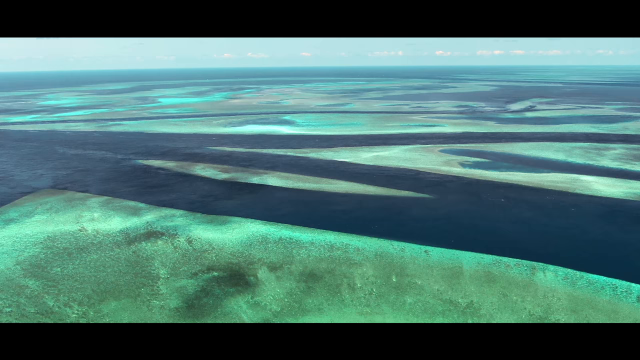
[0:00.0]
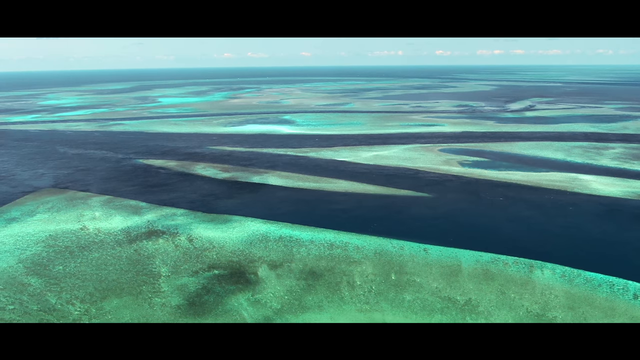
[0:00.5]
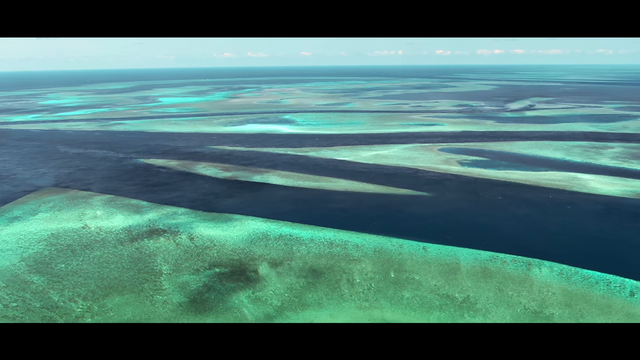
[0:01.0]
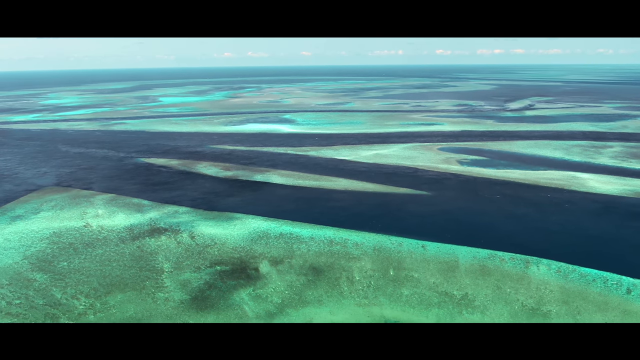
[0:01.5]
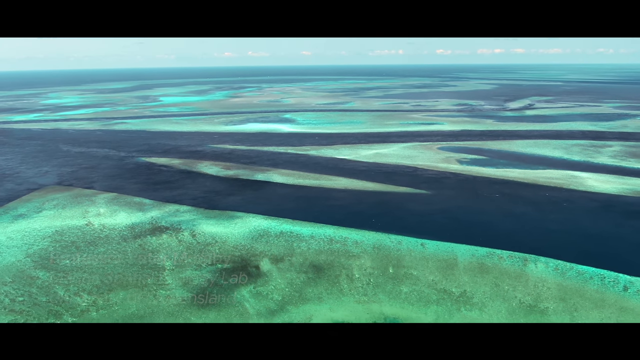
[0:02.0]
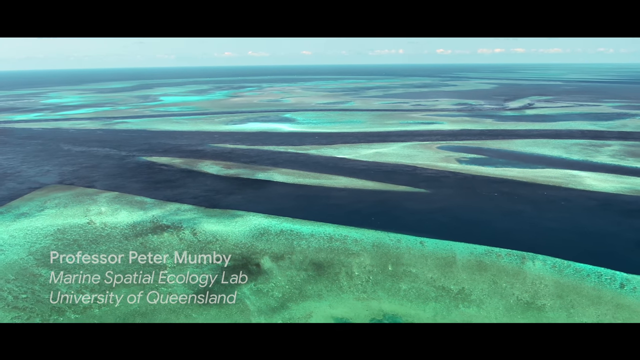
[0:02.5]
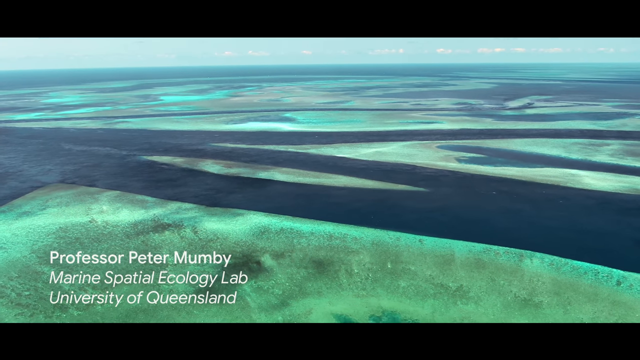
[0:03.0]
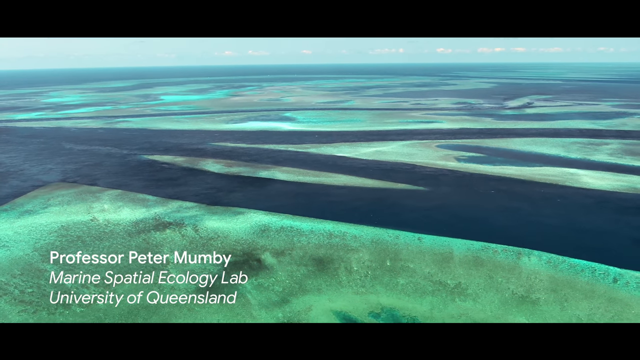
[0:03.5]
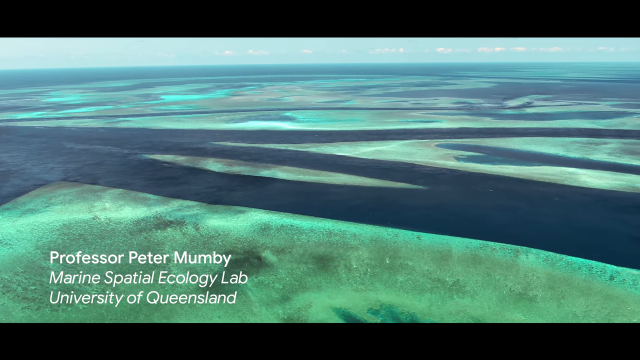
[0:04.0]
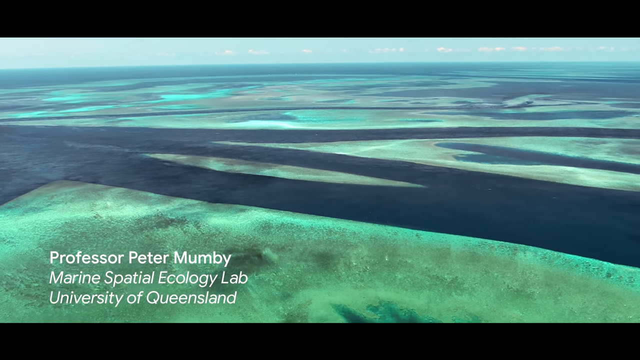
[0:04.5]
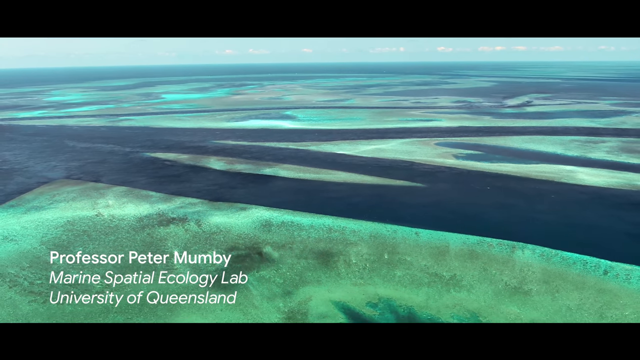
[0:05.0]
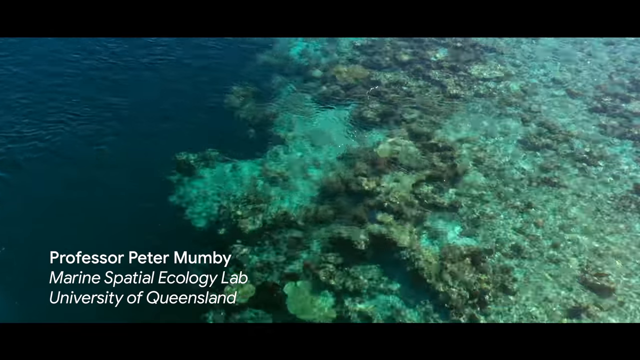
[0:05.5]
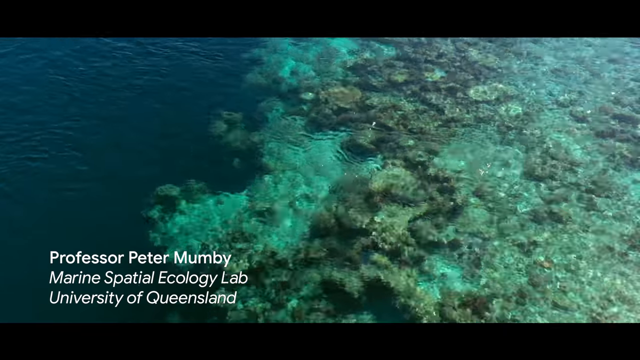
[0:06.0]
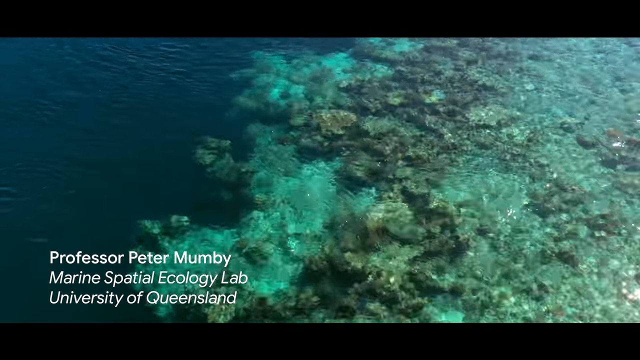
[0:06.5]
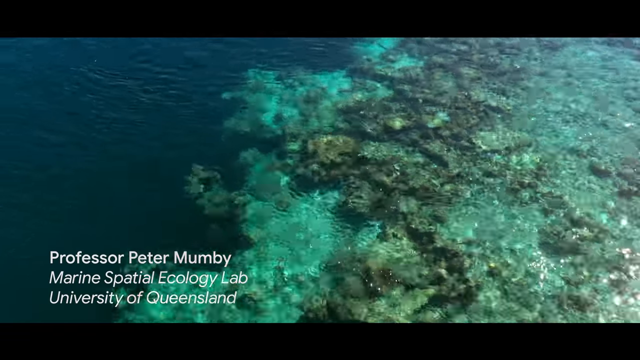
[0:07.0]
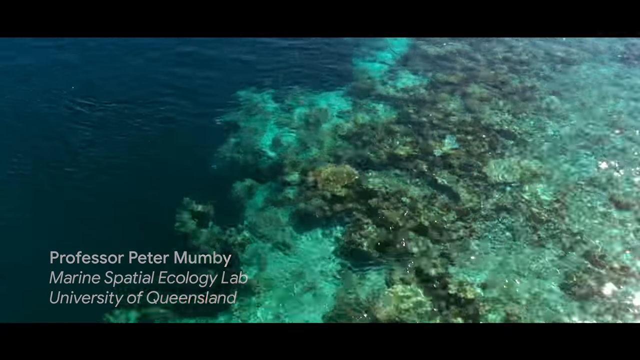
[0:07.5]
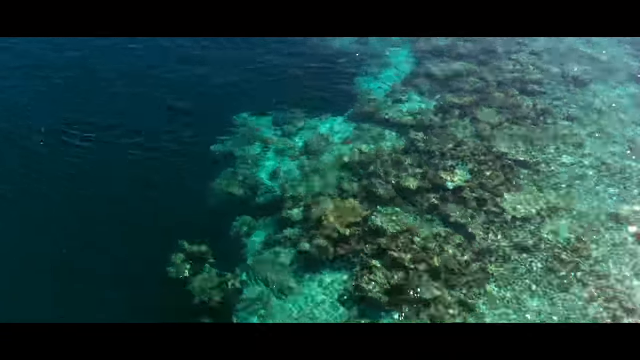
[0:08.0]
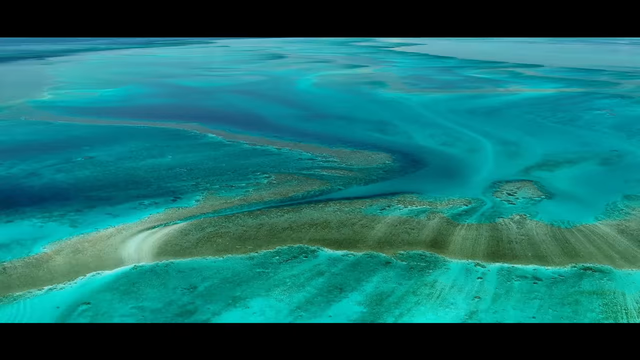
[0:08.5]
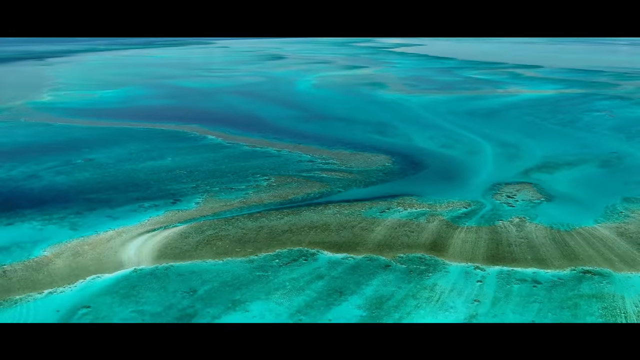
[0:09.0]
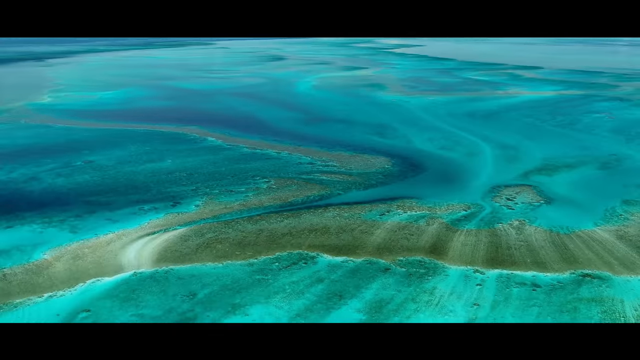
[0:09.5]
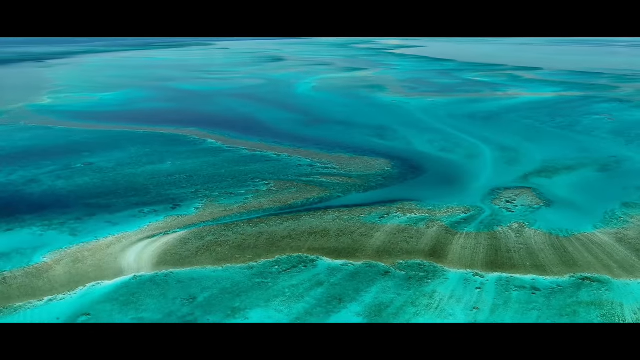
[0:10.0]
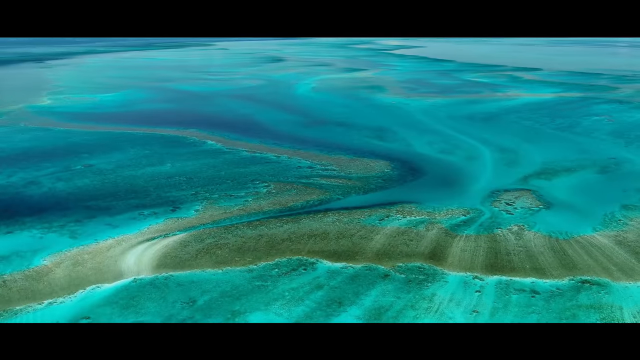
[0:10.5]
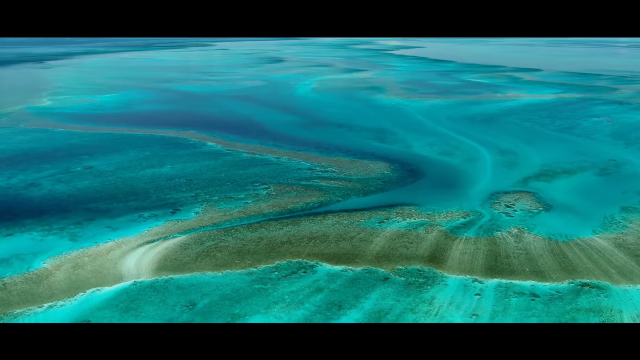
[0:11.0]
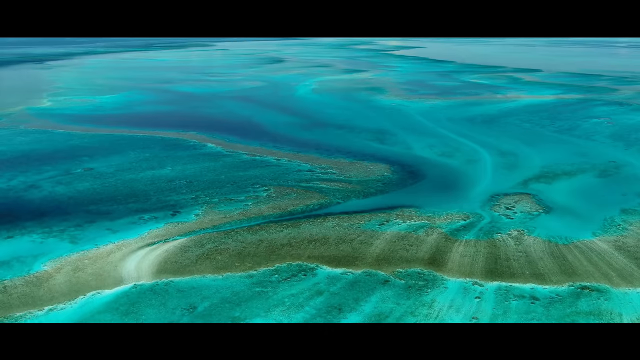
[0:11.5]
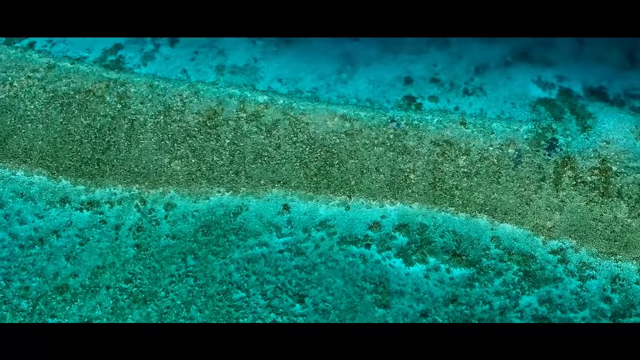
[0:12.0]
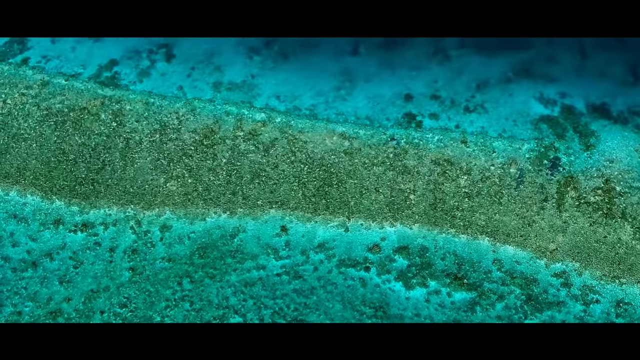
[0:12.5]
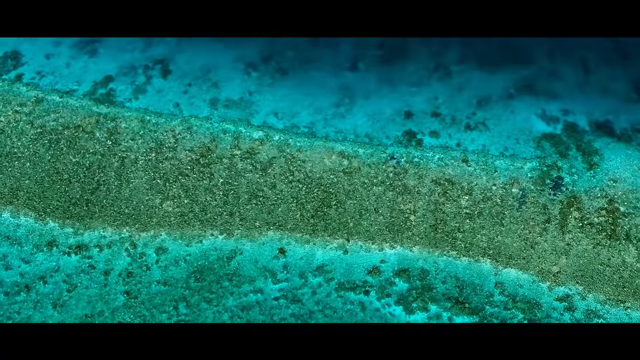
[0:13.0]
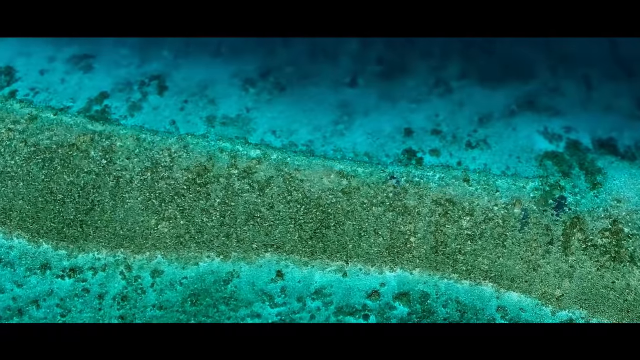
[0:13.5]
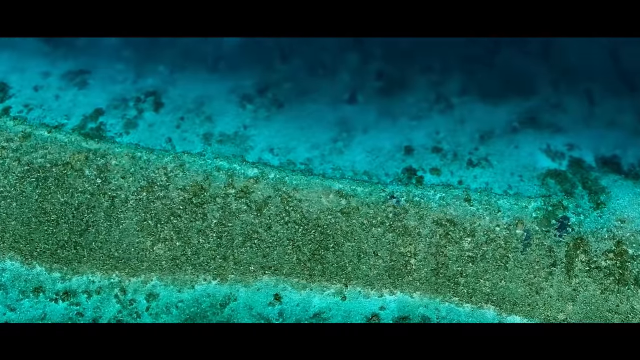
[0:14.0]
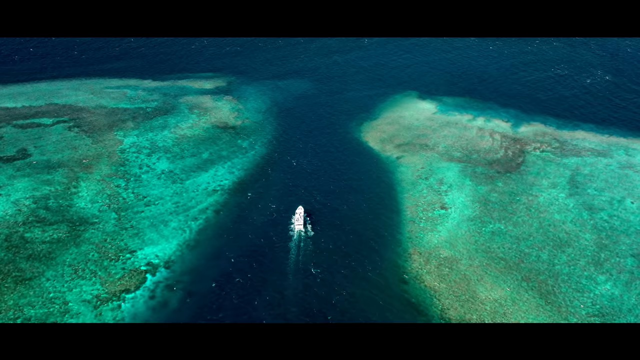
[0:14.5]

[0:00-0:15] A scuba diver is in the ocean. At the beginning, the view is above the water, and white text in the bottom left corner reads "Professor Peter Mumby, Marine Spatial Ecology Lab, University of Queensland." The top of a coral reef is just below the water. The camera pans over the edges of the reef, and a ship sails slowly between two reefs. The water is blue, with various hues of lighter and darker blue. Some sandbars sort of creep up over the water, barely out of it, and then the view fades down into deeper blue water. The tops of some of the coral reefs are very visible just under the surface; they are primarily brown and tan with a little cream and somewhat orangish hues.